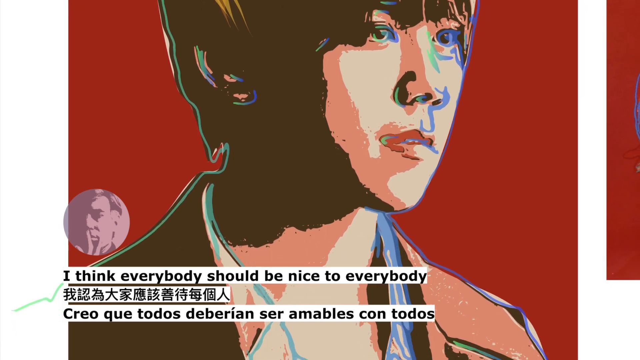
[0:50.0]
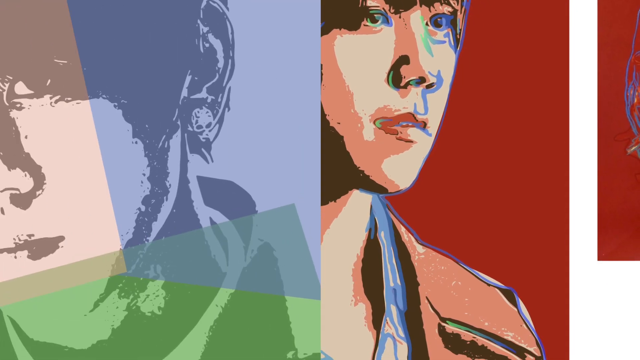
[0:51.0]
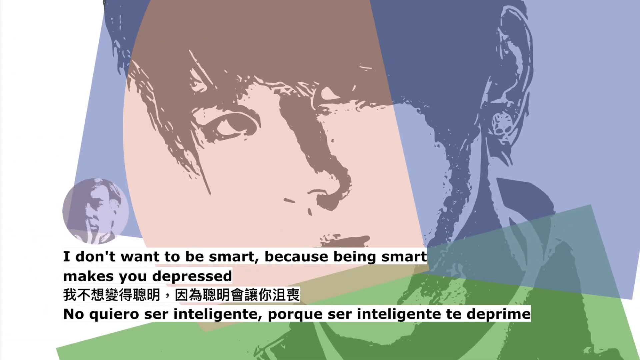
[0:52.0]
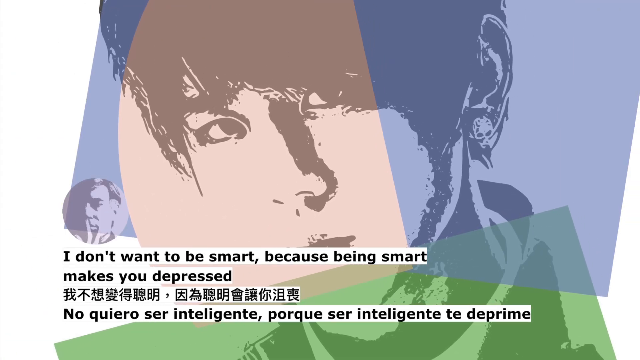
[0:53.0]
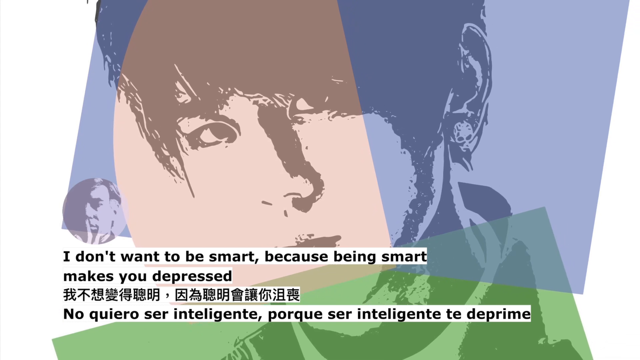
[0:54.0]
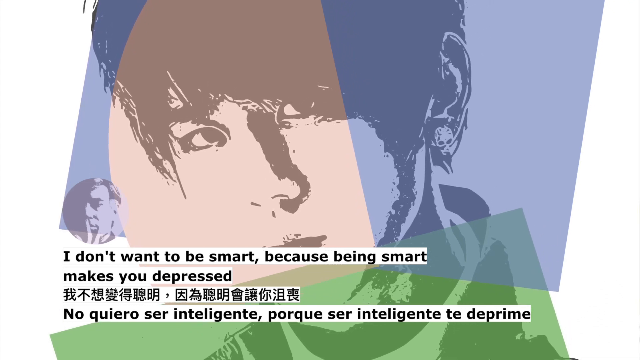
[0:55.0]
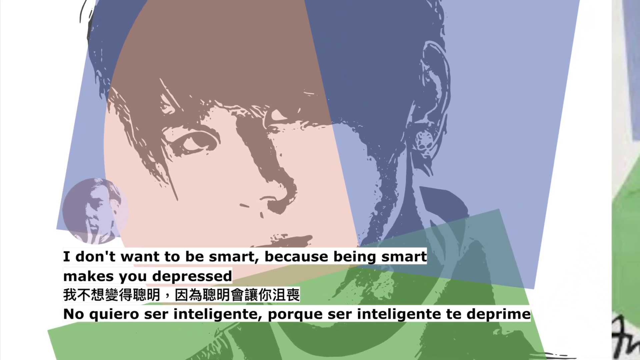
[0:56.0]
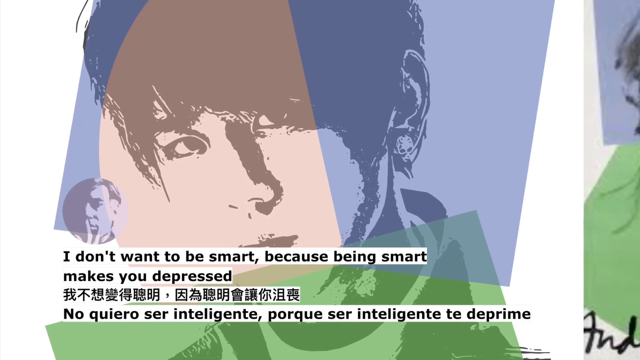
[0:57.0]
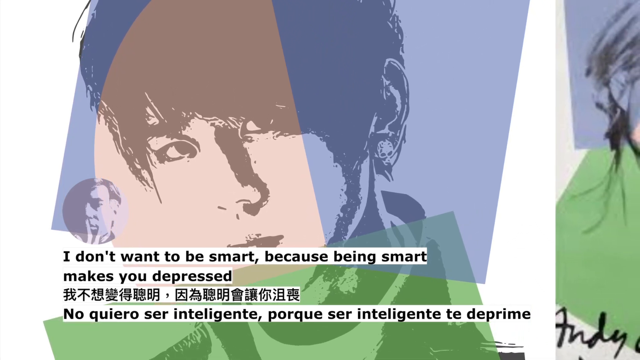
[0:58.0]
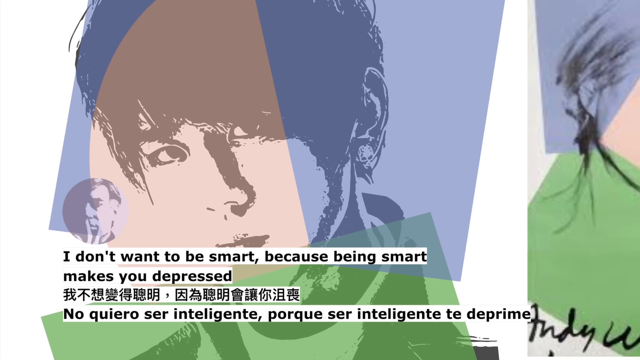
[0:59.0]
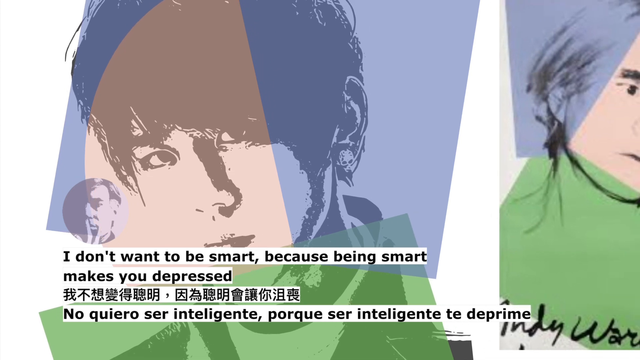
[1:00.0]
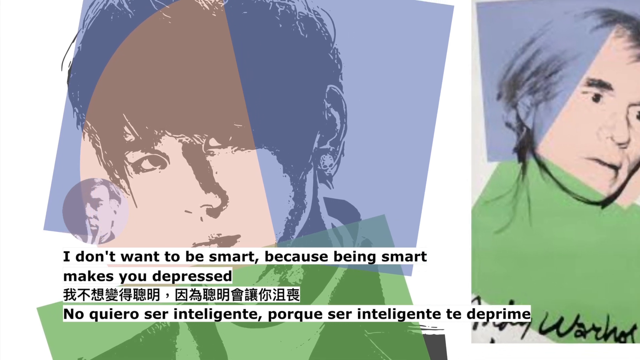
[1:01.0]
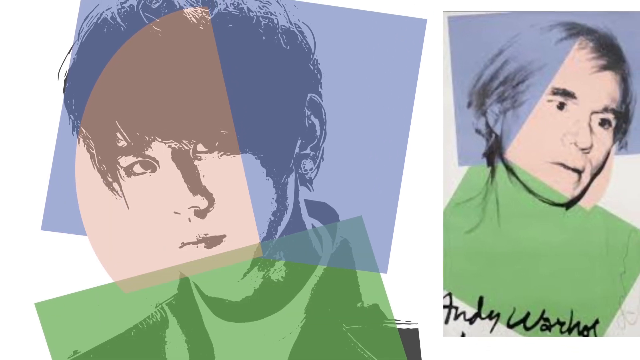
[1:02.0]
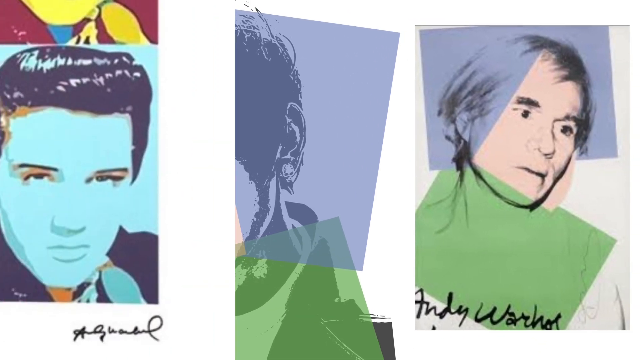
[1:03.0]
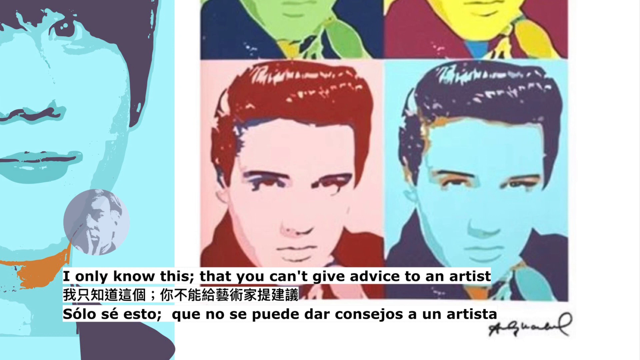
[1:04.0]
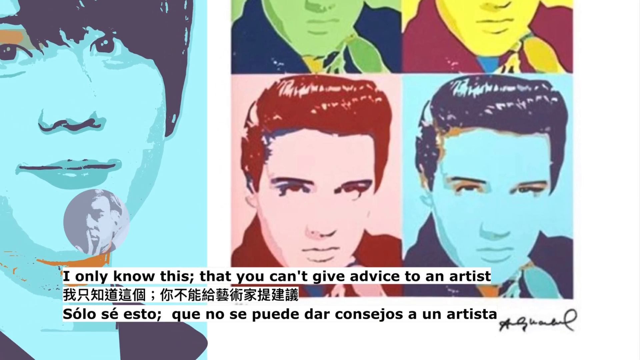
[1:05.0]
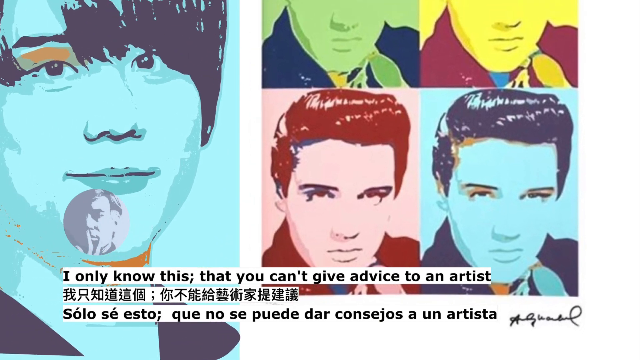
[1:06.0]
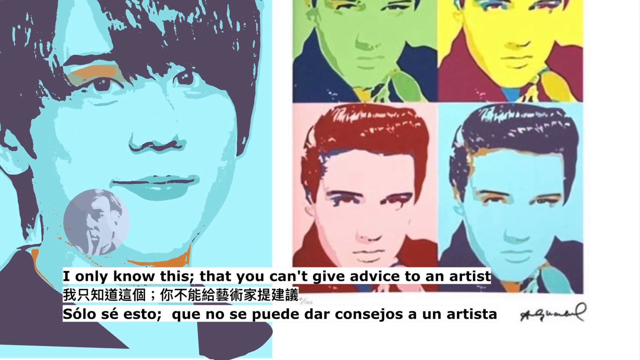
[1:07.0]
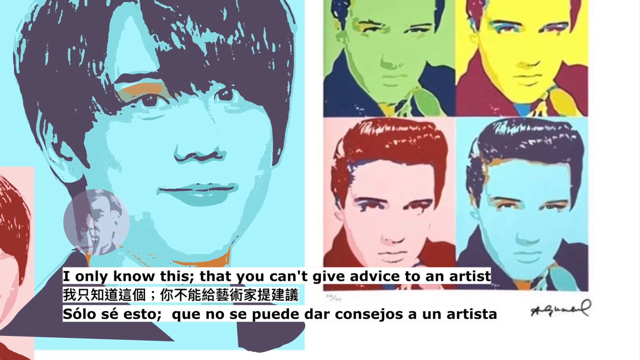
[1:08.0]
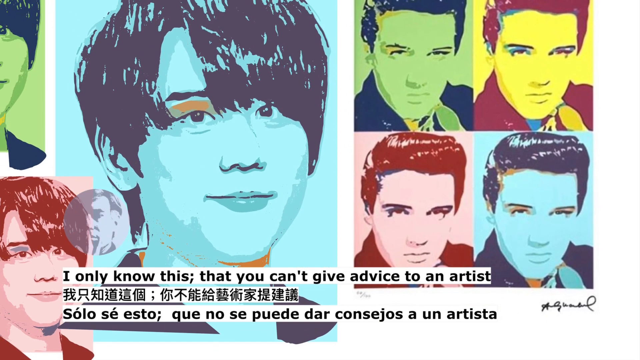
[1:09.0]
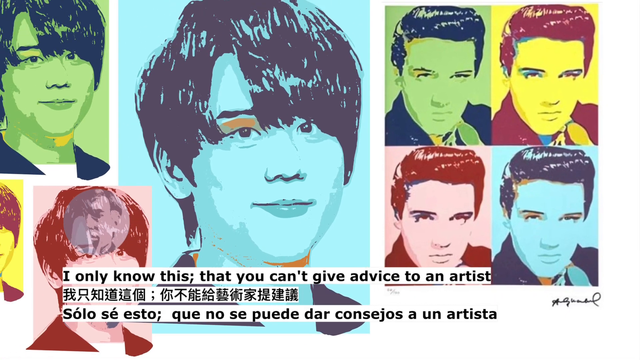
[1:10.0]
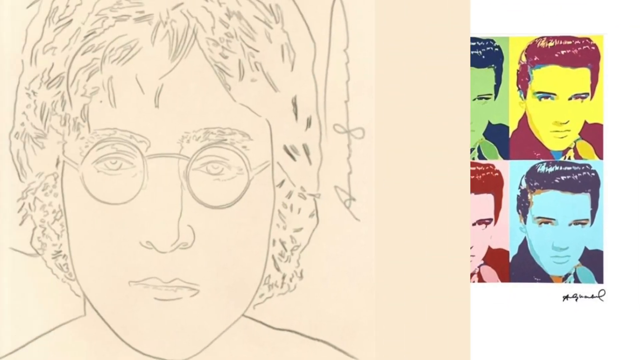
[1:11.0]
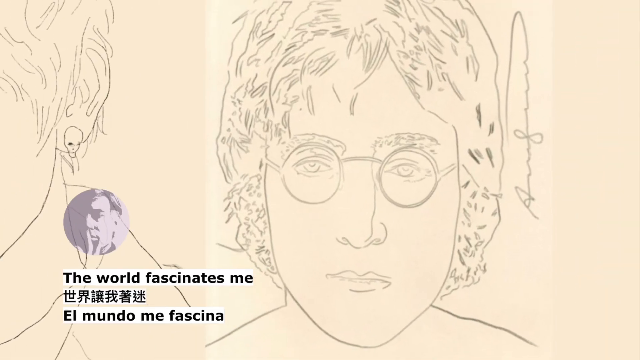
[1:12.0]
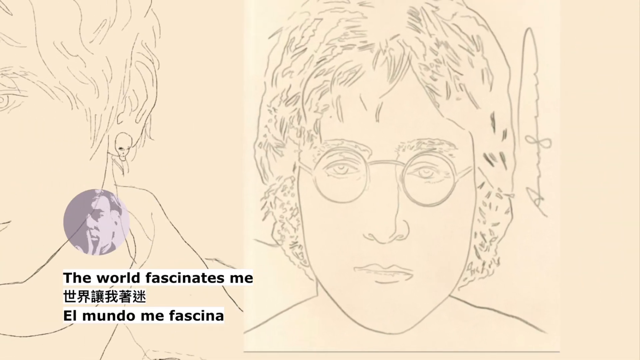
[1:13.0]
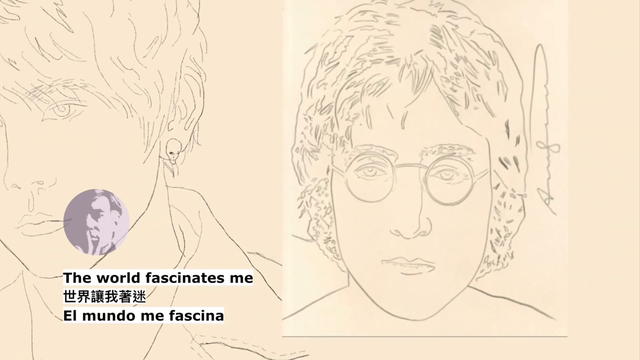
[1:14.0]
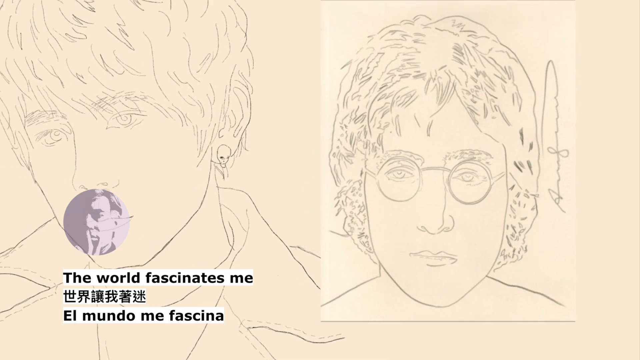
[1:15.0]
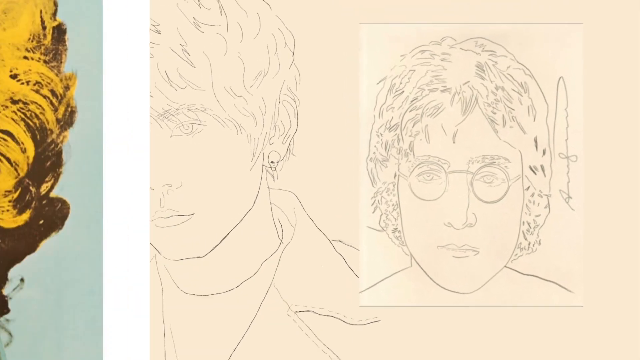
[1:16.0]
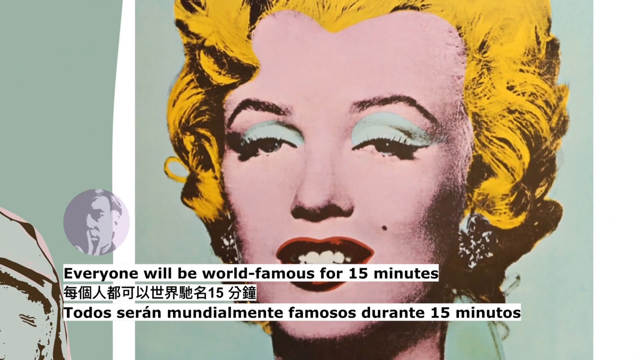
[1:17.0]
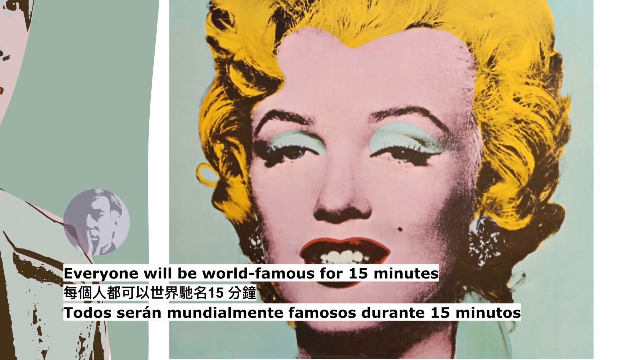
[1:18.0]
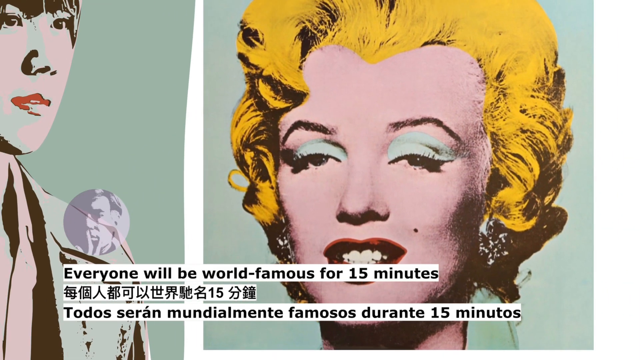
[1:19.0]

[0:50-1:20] An image shows what looks to be an Asian artist. Black lettering below on a white background reads "I think everybody should be nice to everybody", with two other languages below in the same color on a white background. There are white lines on the left and right sides, and crimson red fills the background and the main center. The figure has a white face, black hair, a black outline around the neck, black on the clothing on the left side and lighter brown to the right, and a blue outline around the eyes, nose and mouth. The next image shows the same person in a different color variation, with black lettering on a white background reading "I don't want to be smart because being smart makes you depressed" and the same words in two different languages below. A light purple outline of a person's face is in a circle on the left side. The same Asian man is in the center with black hair, a black outline around the eyes, nose and mouth, and white around the face. The image is broken up into squares: off white on the left, powder blue to the right, and more green at the bottom, with a white background on the left and right sides. As the camera pans back, Andy Warhol is visible on the right side, his eyes, nose and hair all gray and white, with a green square under the chin and black lettering underneath reading "Andy Warhol". The next image slides across, showing Elvis: the left image has him with reddish hair and a white face, and the right one has black hair and a powder blue face, with the nose, mouth and eyes visible in both. Black lettering underneath on a white background reads "I only know this, that you can't give advice to an artist", with the same wording below in the same color. The Asian artist is off to the left, here with black hair and a powder blue face, and the Elvis image above shows green, then yellow, and black hair on the left. The next image shows the lettering "the world fascinates me" at the bottom left in black on a white background, with a light gray image of the artist. On a more beige background is a grayish pencil outline of John Lennon's face with glasses, showing his eyes, nose and mouth, with some lettering on the right side, and the same artist drew himself on the left side.